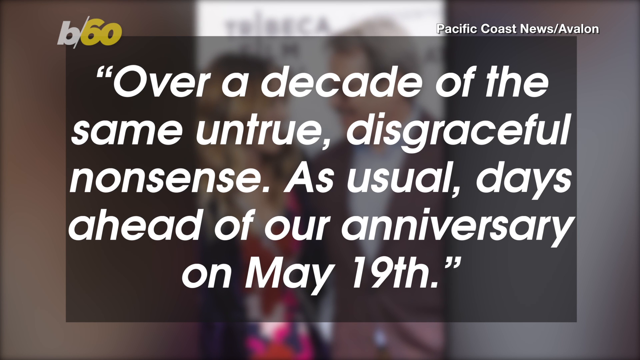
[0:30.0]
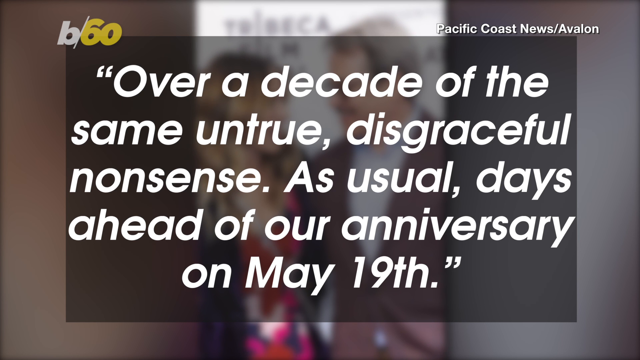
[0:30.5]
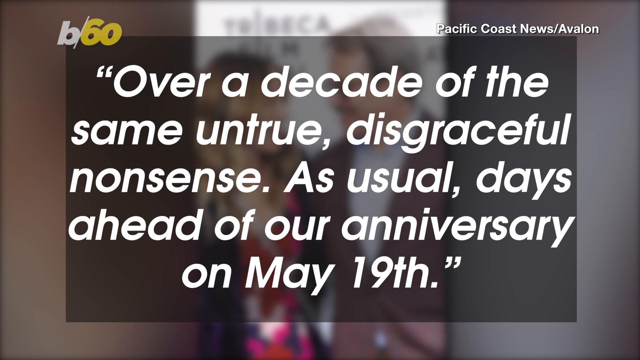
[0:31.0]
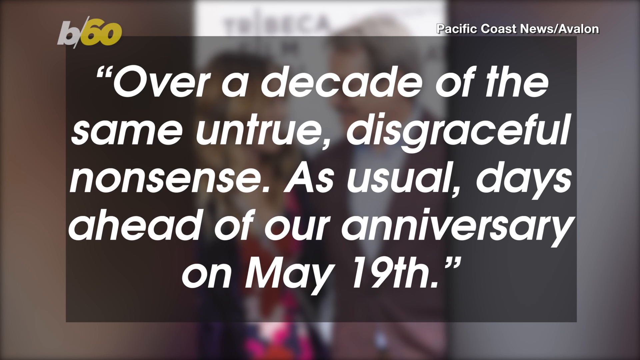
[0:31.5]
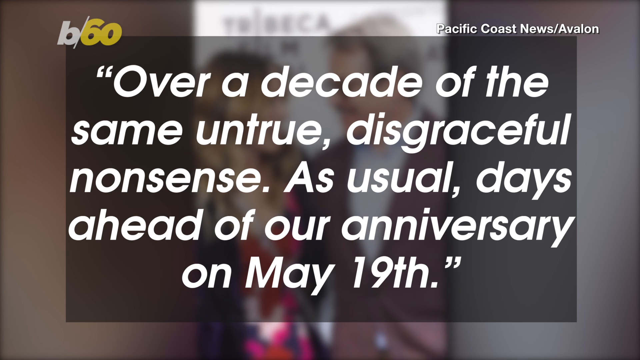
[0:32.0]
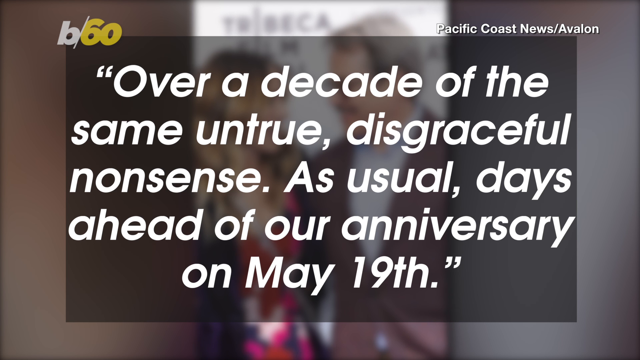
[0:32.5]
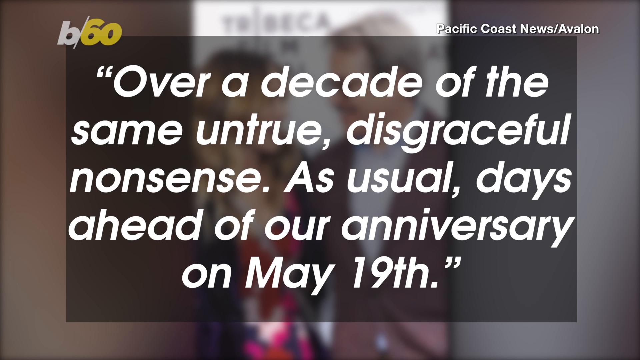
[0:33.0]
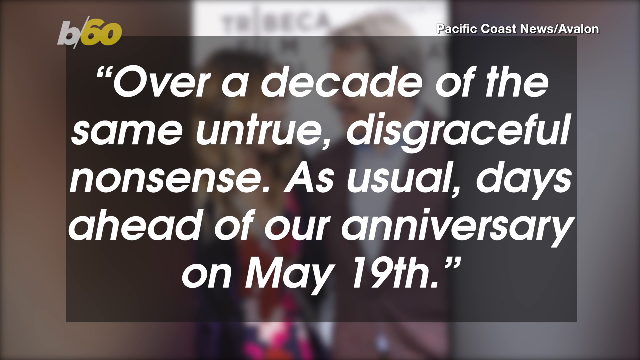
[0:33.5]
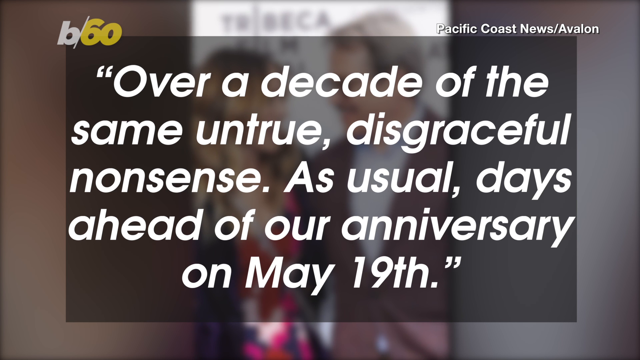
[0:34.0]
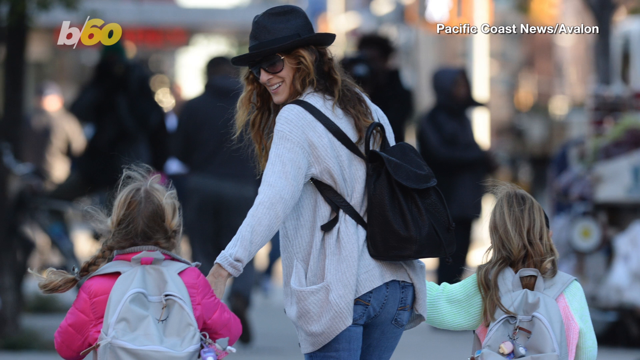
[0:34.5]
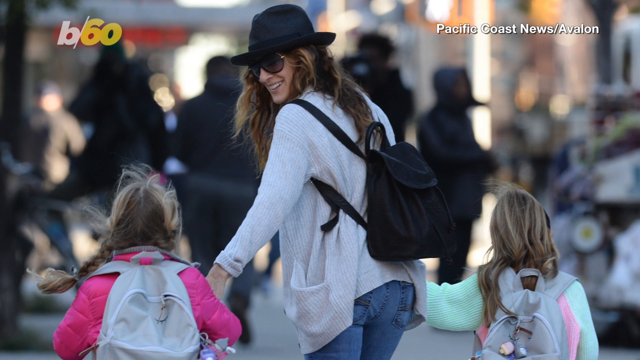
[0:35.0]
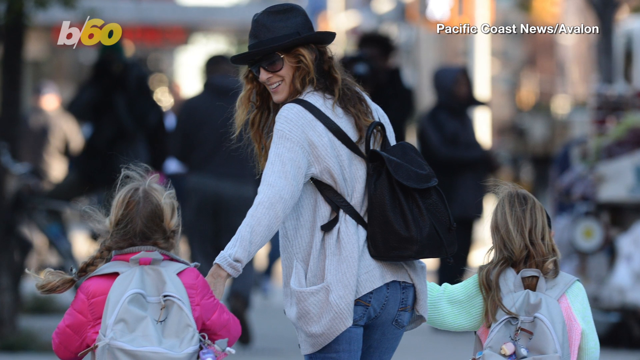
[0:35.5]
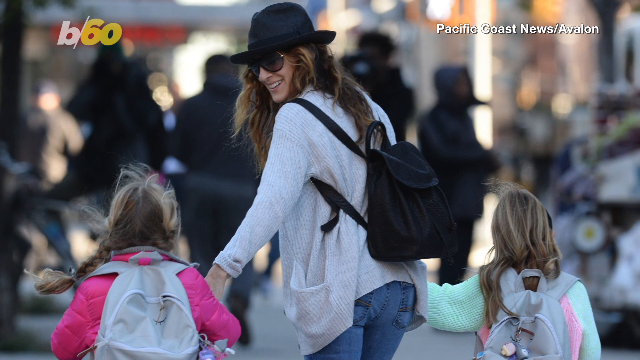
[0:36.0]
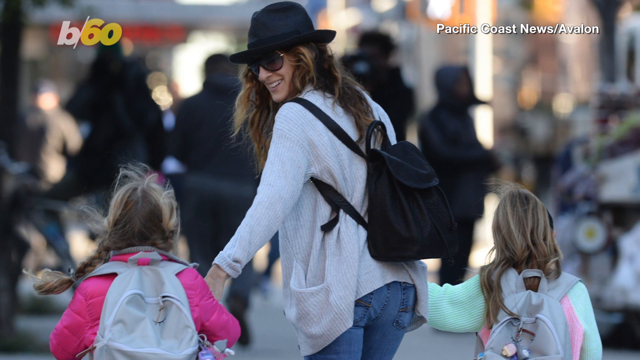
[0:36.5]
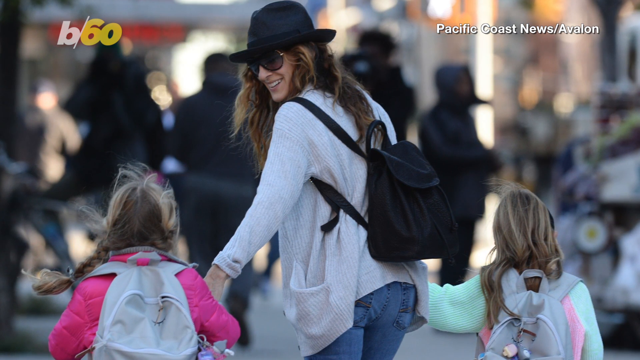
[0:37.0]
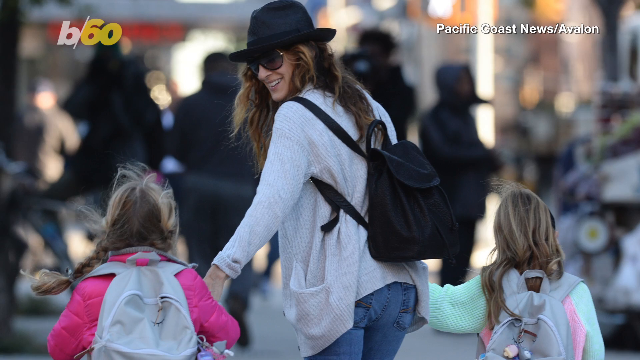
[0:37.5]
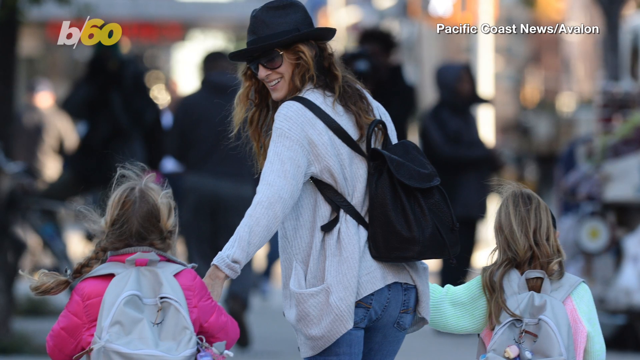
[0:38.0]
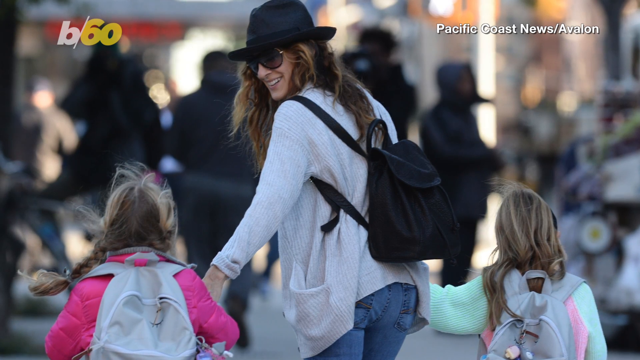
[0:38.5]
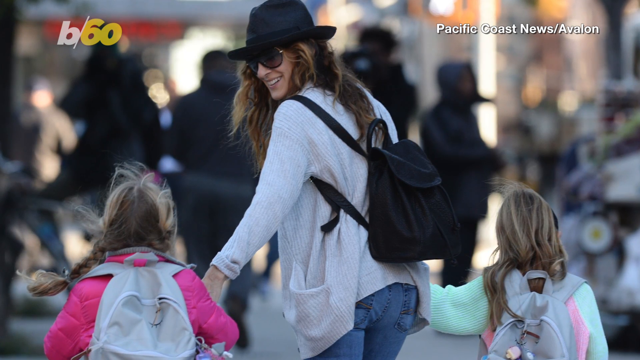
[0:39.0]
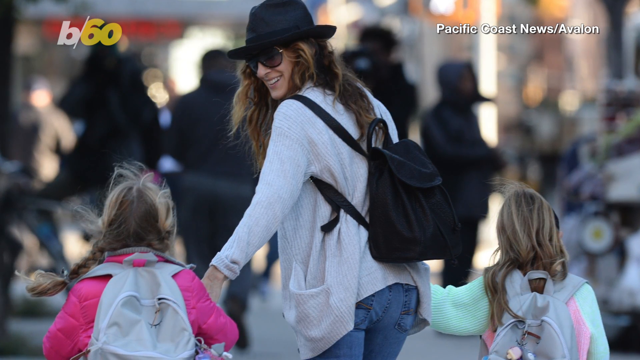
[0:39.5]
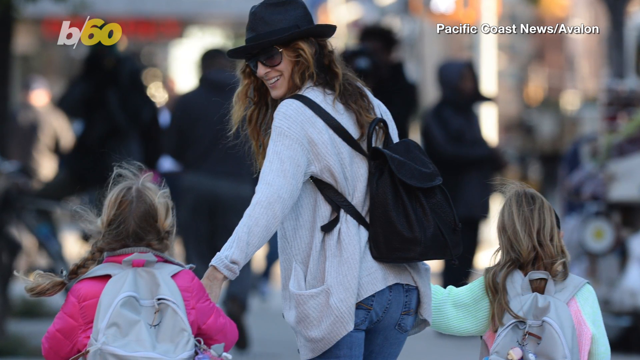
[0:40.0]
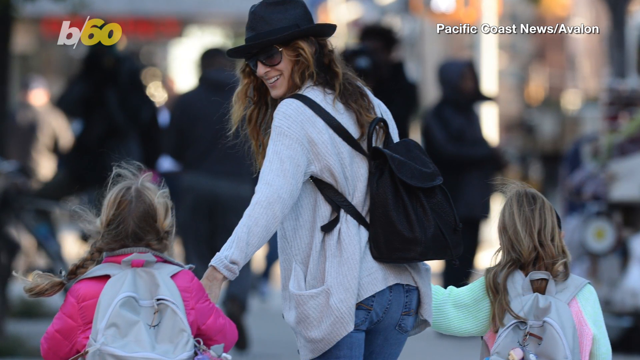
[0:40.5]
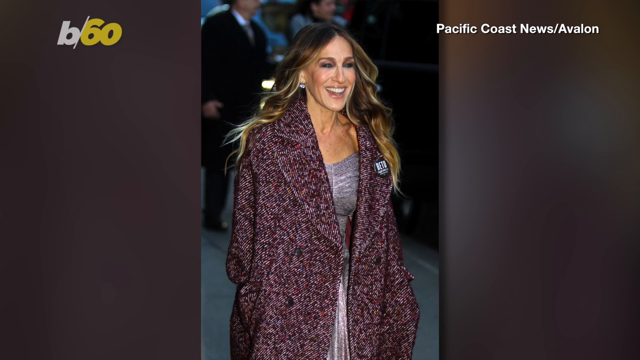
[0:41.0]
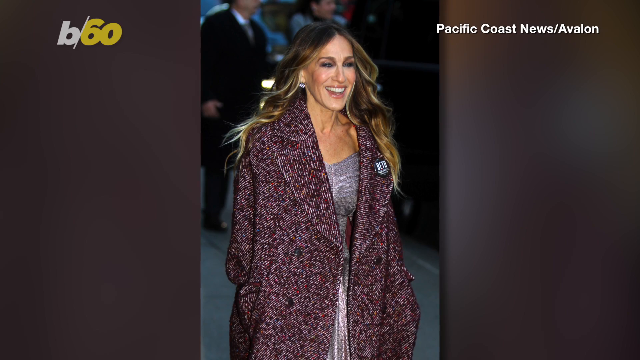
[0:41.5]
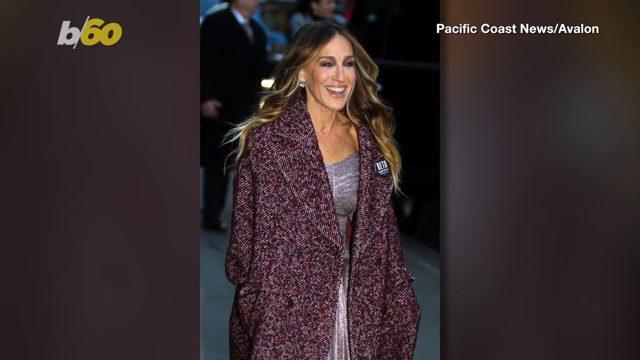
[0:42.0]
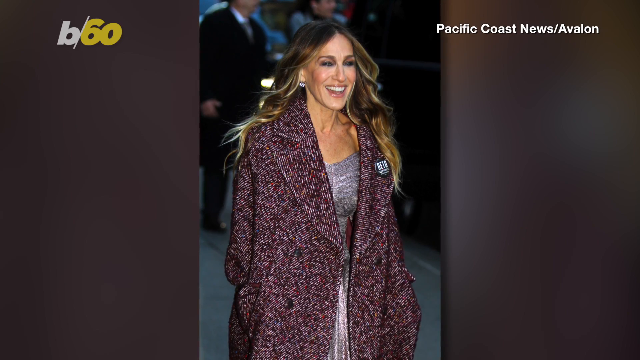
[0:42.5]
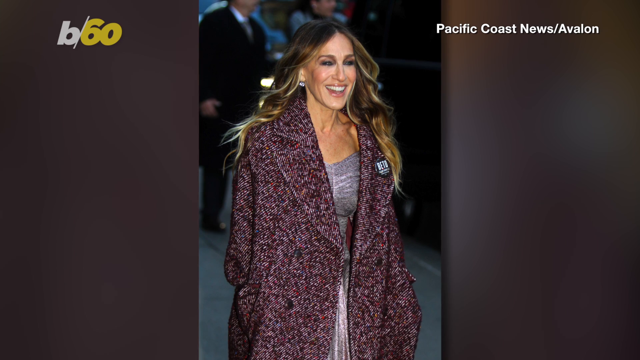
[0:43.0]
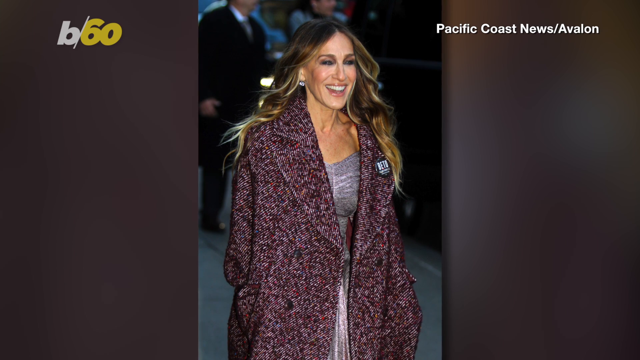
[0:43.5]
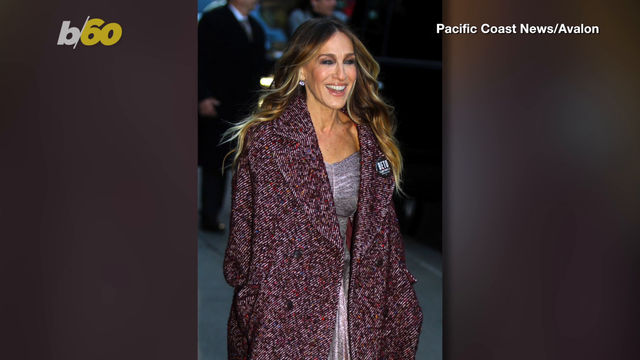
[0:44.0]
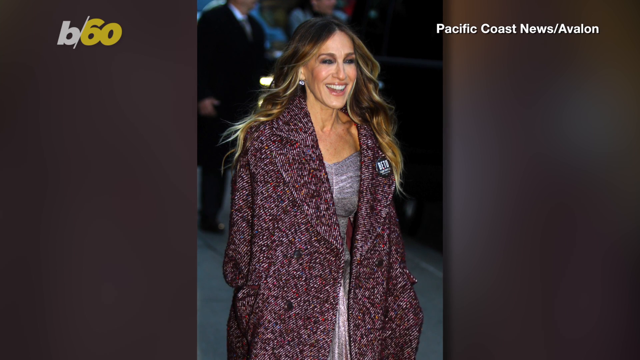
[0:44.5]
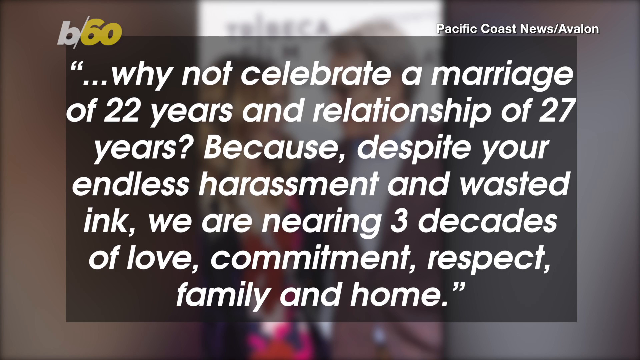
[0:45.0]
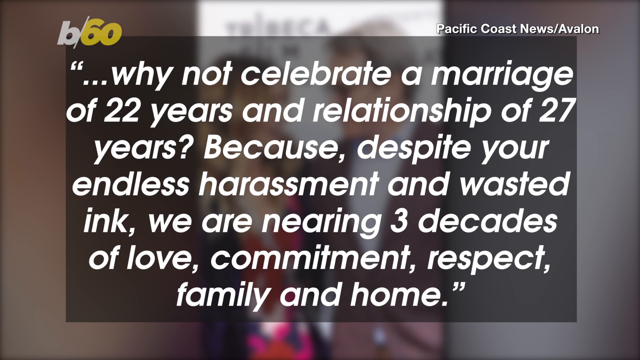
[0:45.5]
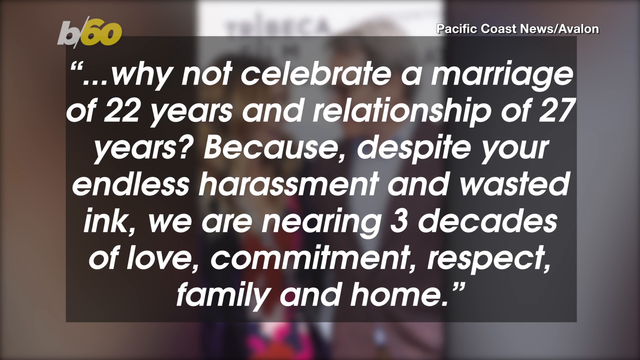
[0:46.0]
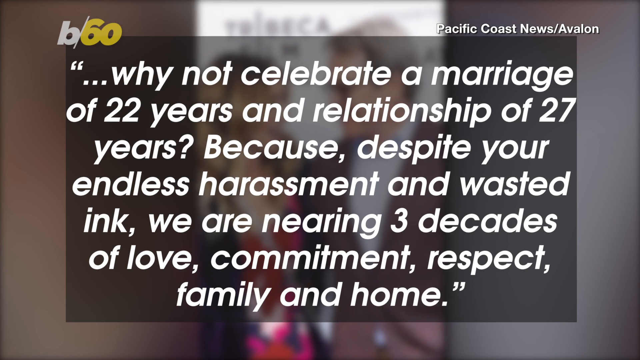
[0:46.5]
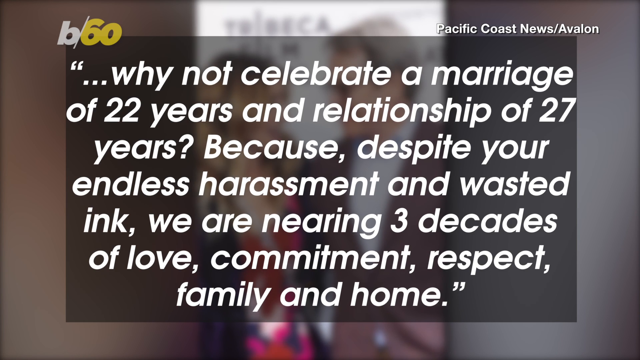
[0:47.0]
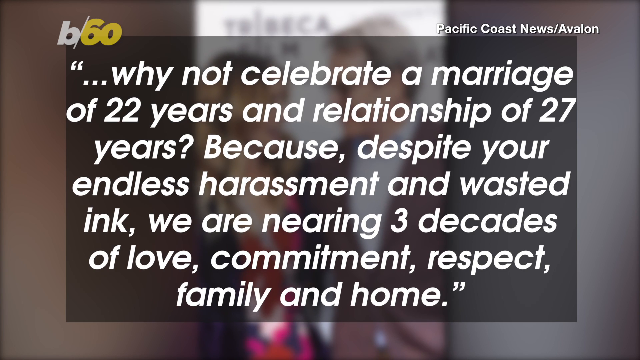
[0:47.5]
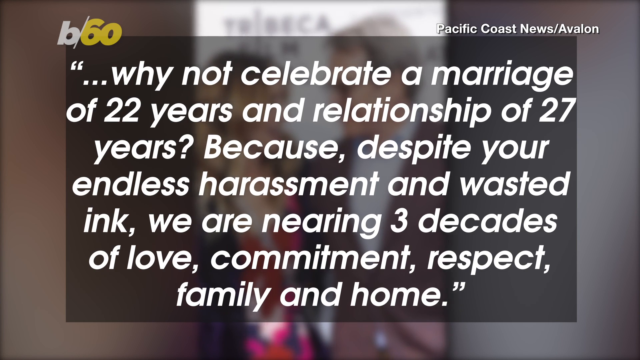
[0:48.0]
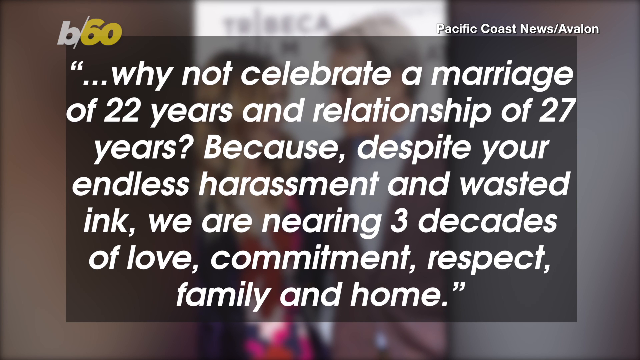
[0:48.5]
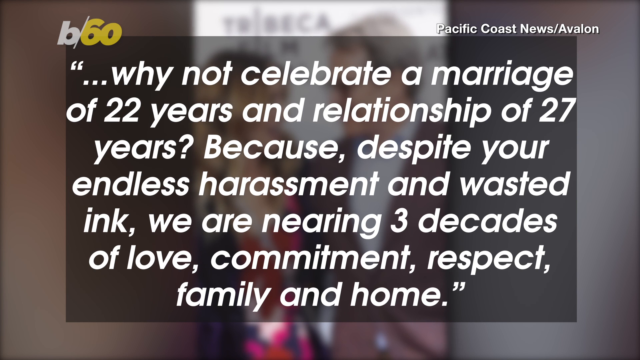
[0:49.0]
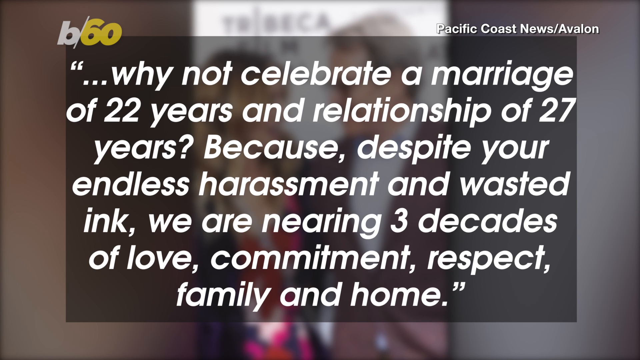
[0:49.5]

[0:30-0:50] Text is shown over the still image: "over a decade of the same untrue disgraceful nonsense as usual, date of our anniversary on May 19th". At the top right it still says "Pacific Coast News Avalon". The video suddenly transitions to another image, this one in landscape format, showing likely the same woman from before walking away from the camera with two children. The child on the left is smiling and has a backpack, and it appears the child on the right does too. The camera slowly zooms in on this image. It then transitions back to the image shown at the beginning of the video, with the woman walking towards the right side of the camera. Next it transitions to another image shown before, with text over it: "why not celebrate a marriage of 22 years and relationship of 27 years? Because despite your endless harassment and wasted ink, we are nearing three decades of love, commitment, respect, family, and home." The text is again in a white font over a translucent background.